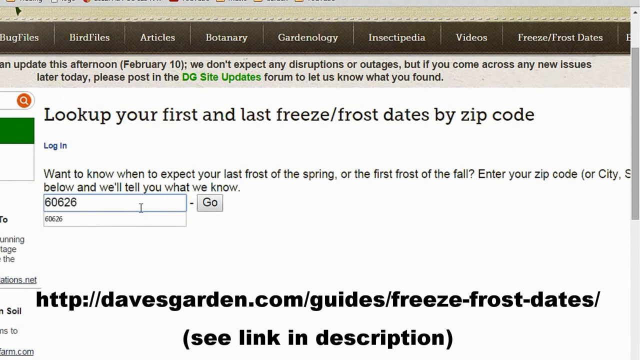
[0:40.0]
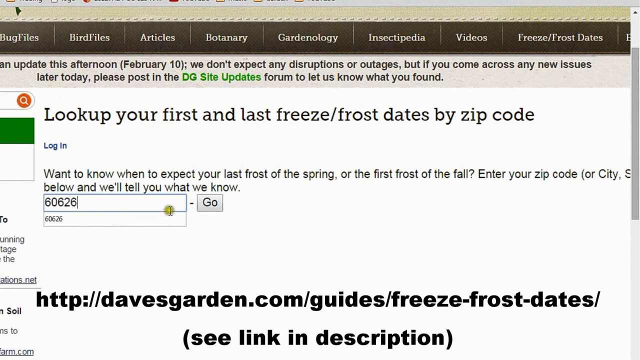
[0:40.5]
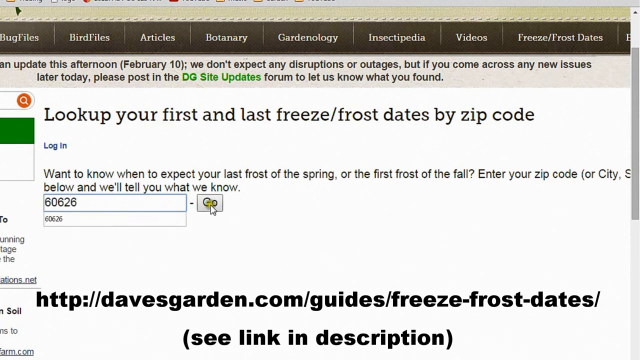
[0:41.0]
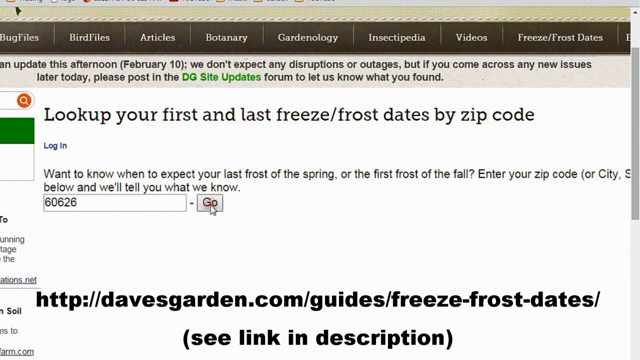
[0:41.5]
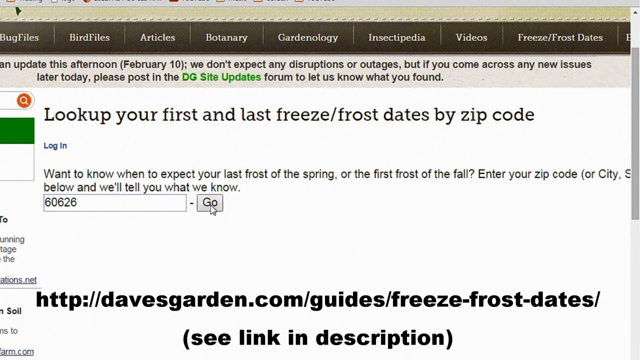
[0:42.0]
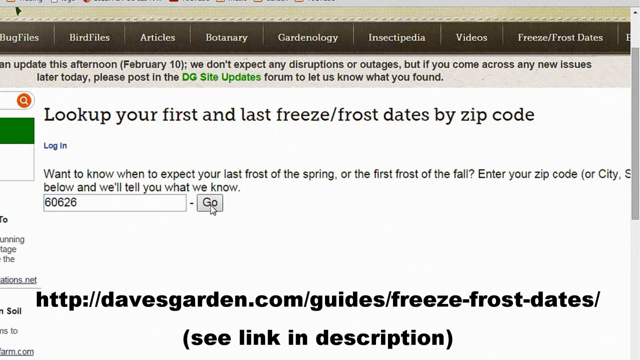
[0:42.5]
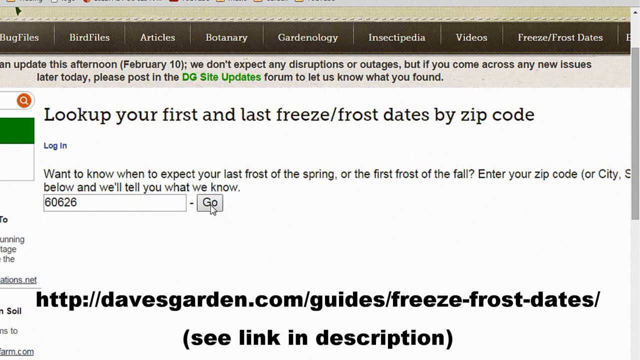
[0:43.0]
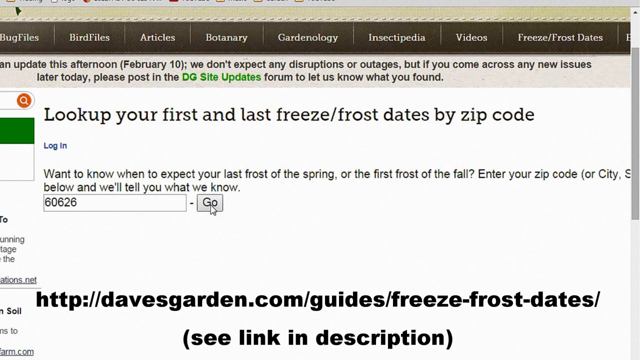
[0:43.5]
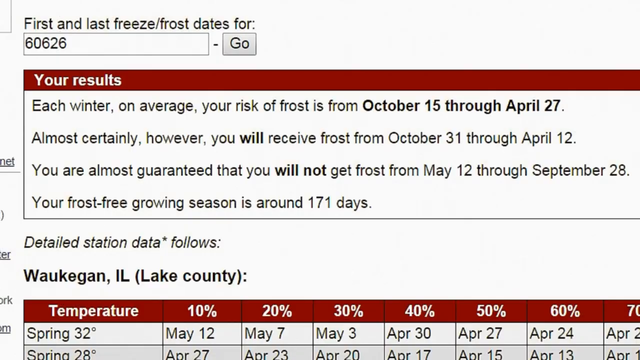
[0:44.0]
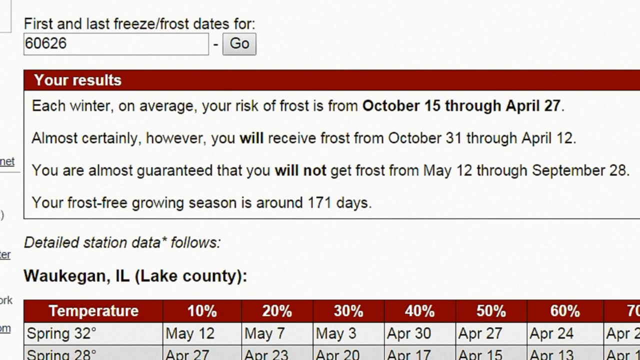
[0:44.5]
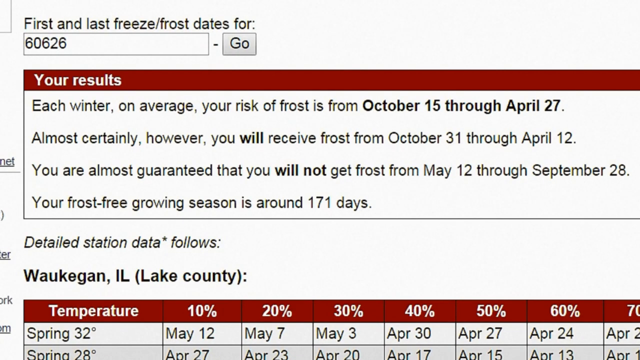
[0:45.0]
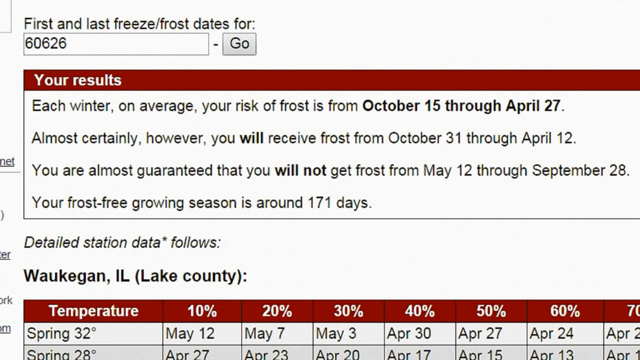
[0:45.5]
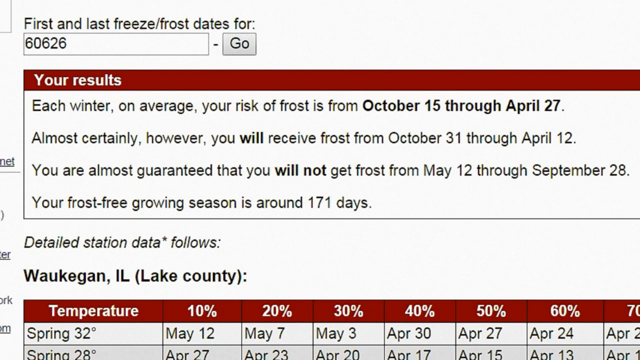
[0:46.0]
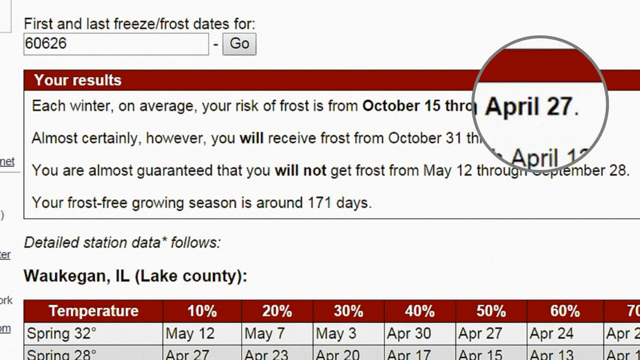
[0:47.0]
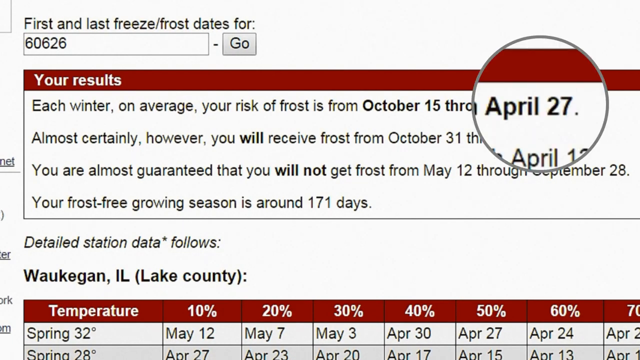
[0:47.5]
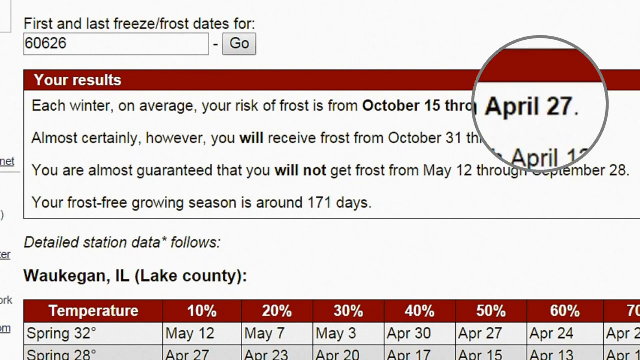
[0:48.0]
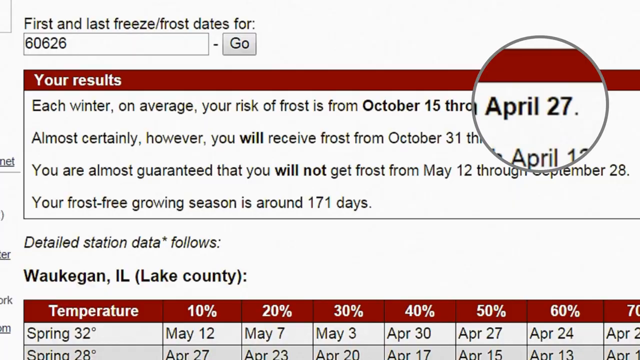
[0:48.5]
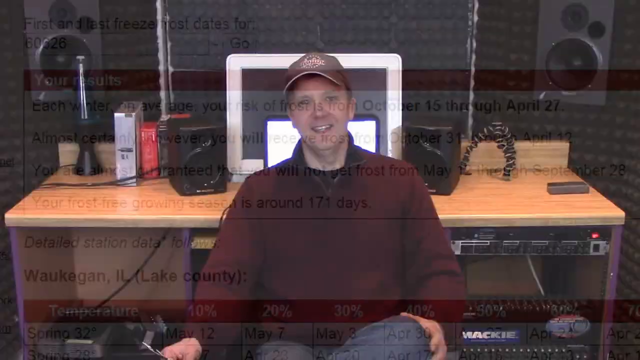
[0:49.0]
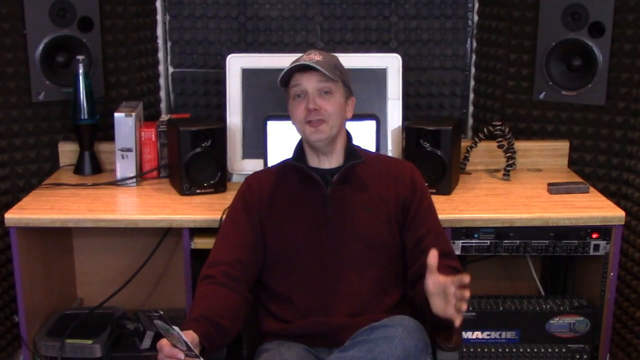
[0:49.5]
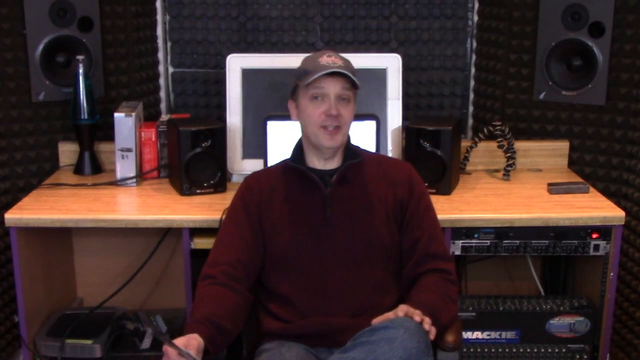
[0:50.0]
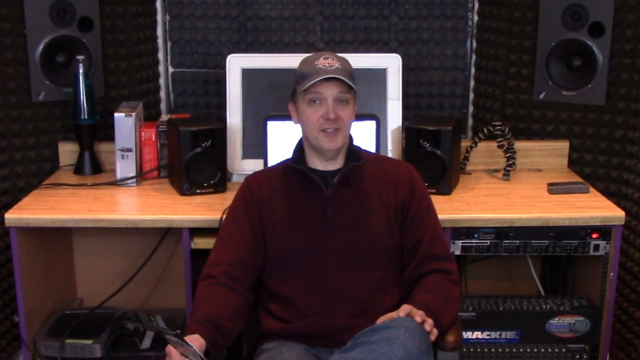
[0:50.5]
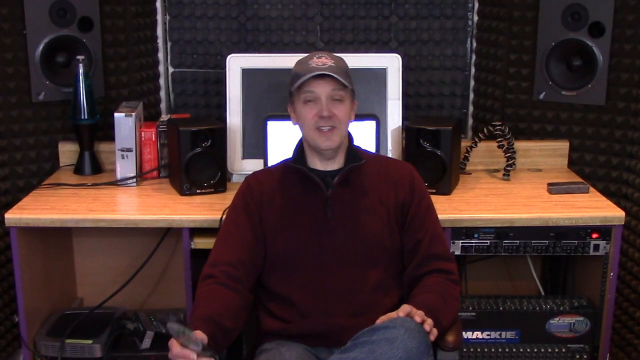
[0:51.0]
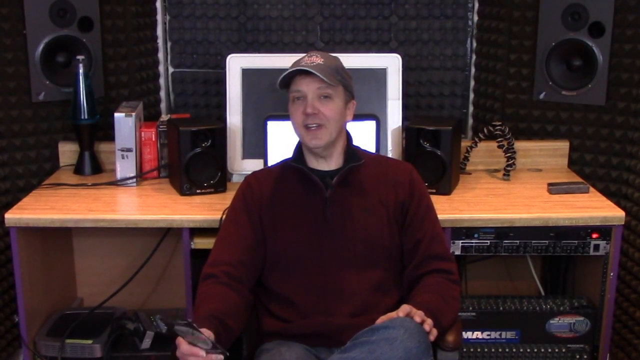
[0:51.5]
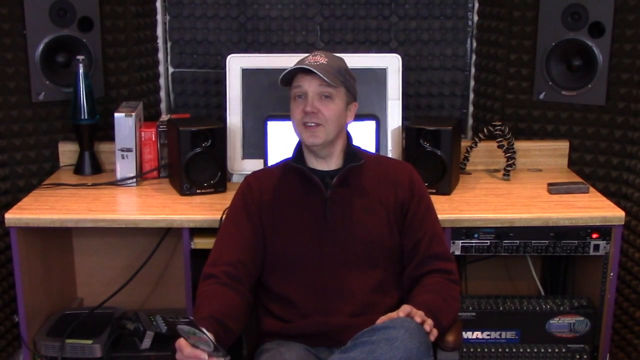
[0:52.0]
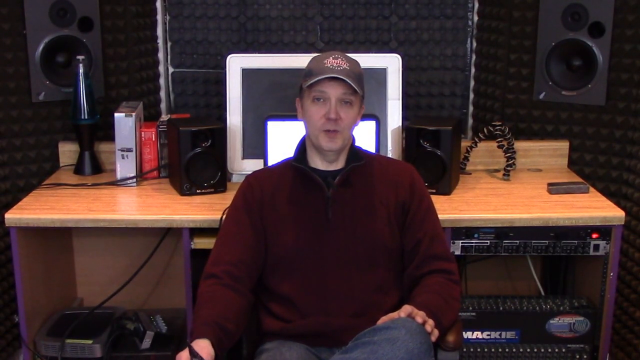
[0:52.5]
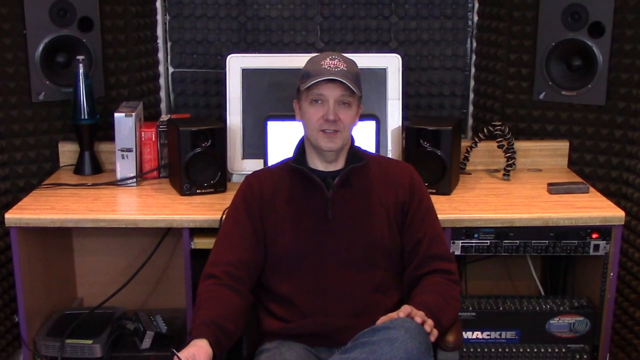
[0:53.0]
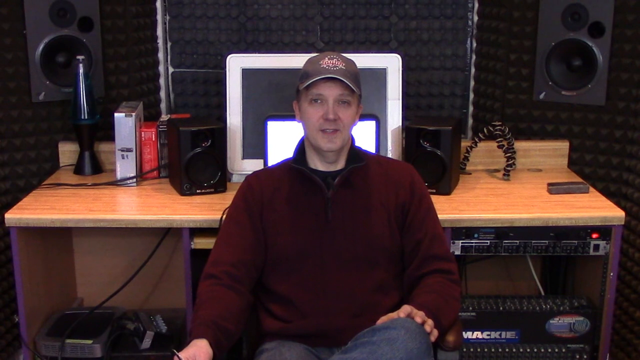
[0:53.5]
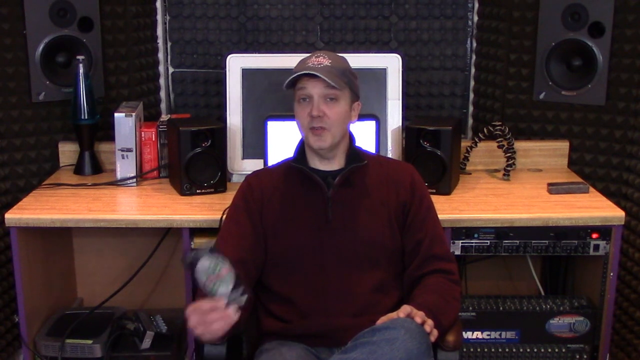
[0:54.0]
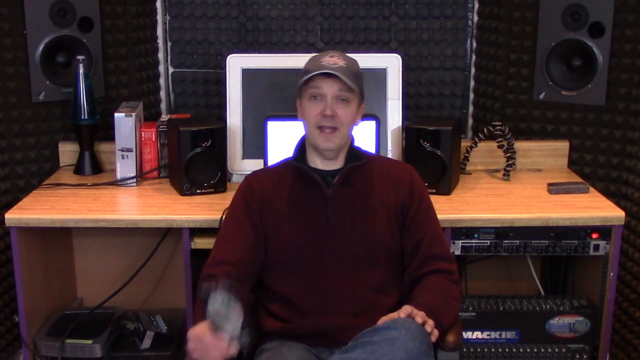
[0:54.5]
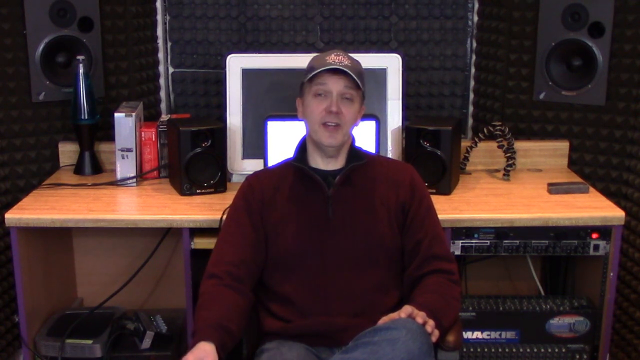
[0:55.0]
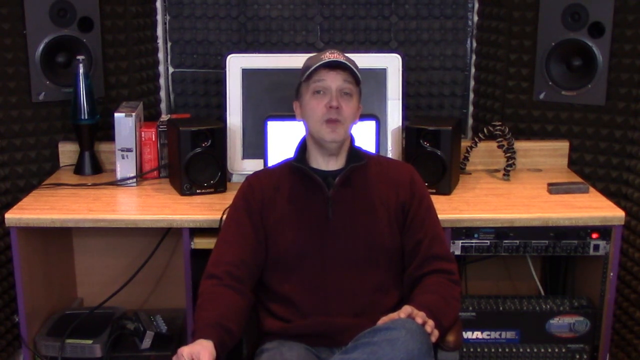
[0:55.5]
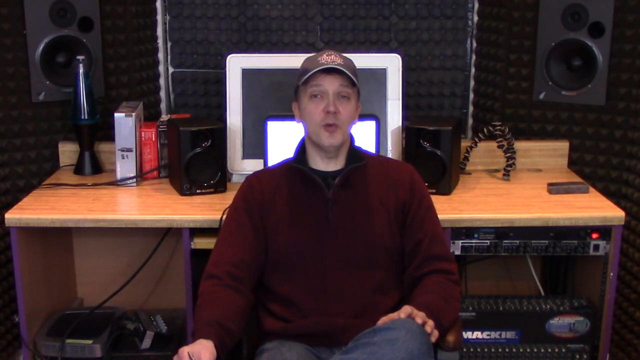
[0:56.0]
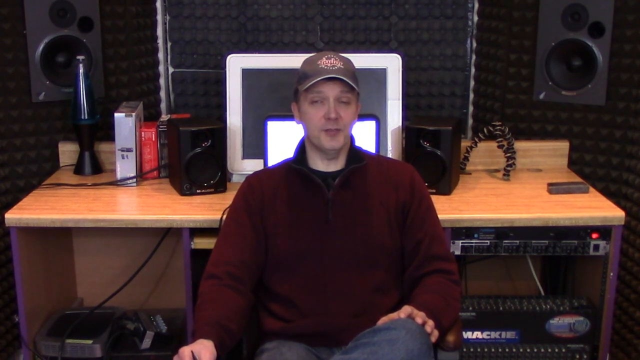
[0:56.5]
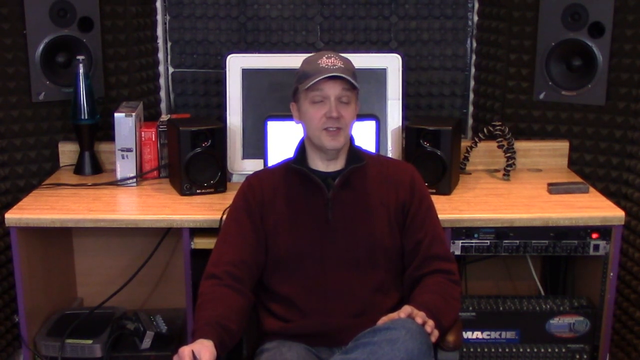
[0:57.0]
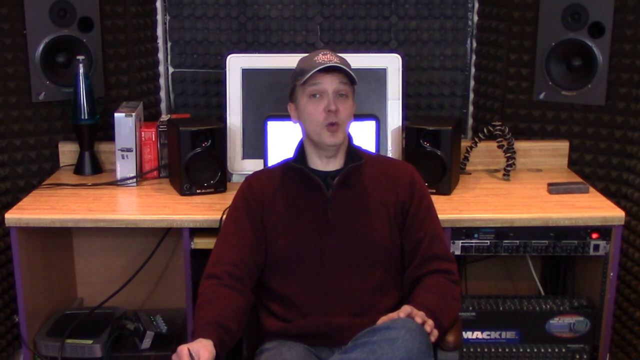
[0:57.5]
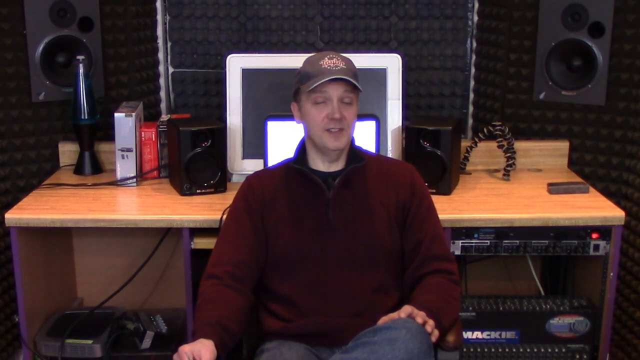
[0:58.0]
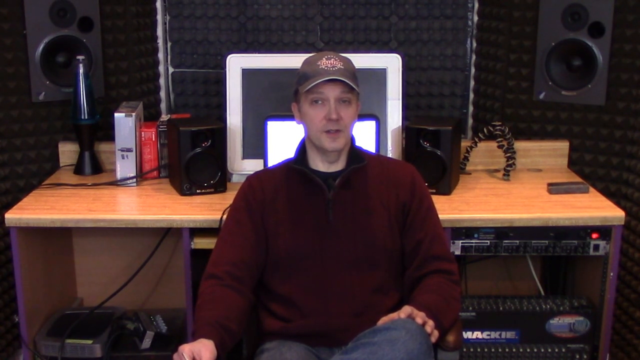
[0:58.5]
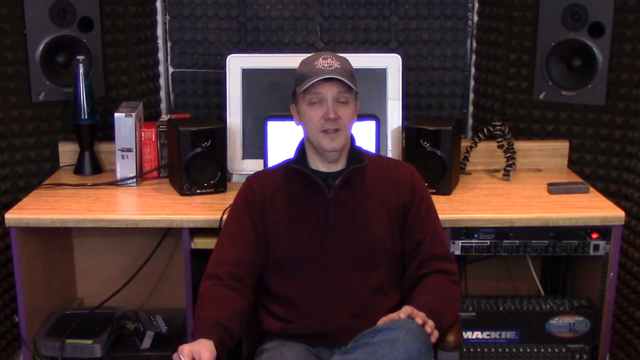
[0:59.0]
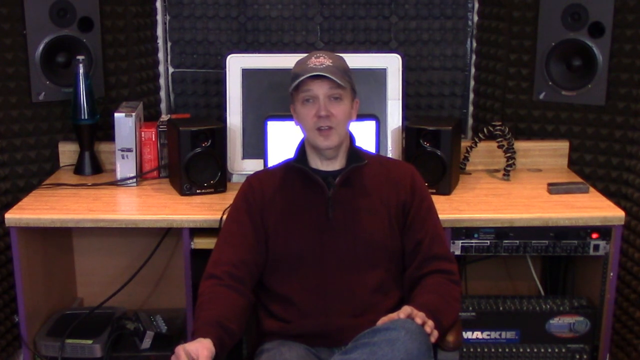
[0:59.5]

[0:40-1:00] After the zip code is entered, the results come up. For zip code 60626, on average the risk of frost each winter runs from the 15th of October to the 27th of April; frost is almost certain from the 31st of October to the 12th of April; and frost is almost guaranteed not to occur from the 12th of May to the 28th of September. The frost-free growing season is calculated at around 171 days. The zip code apparently relates to Waukegan, Illinois, in the Illinois Lake Country. The key dates are highlighted, with April 27th as the last frost date. The video returns to Patrick, who smiles as he presents, apparently holding a leaflet or a packet of flower seeds in his right hand. He looks fairly relaxed and rests his left hand on his thigh as he speaks.